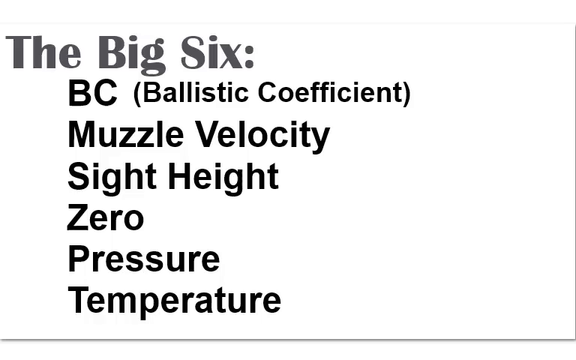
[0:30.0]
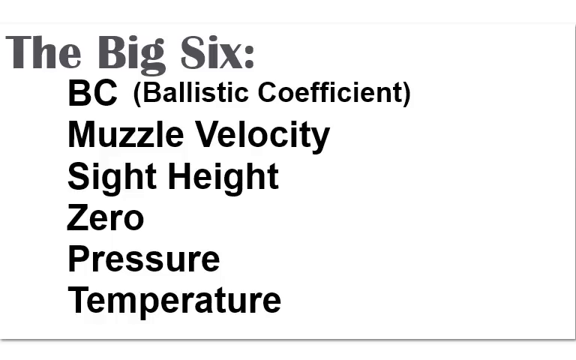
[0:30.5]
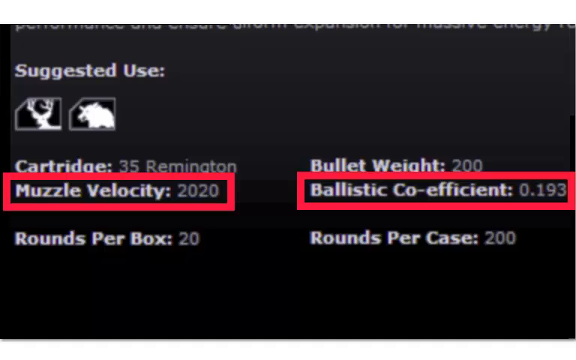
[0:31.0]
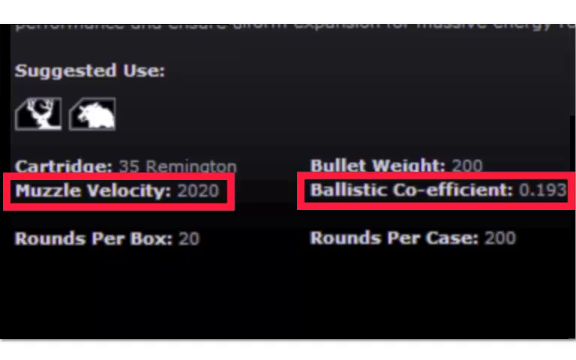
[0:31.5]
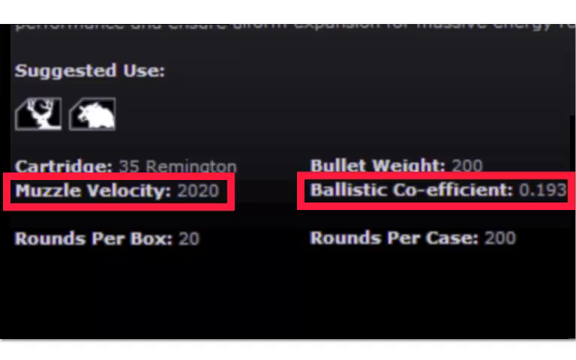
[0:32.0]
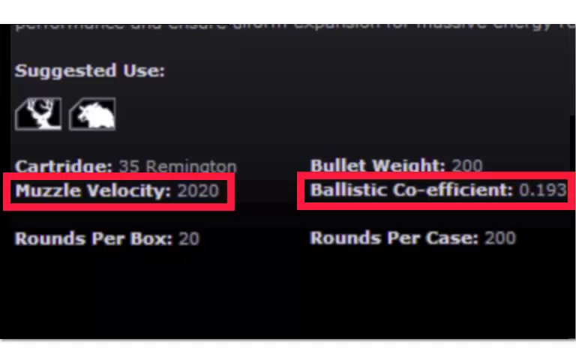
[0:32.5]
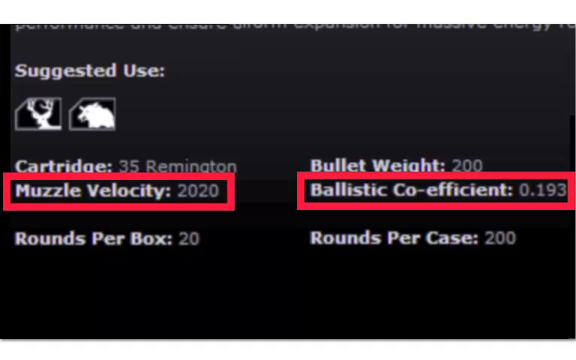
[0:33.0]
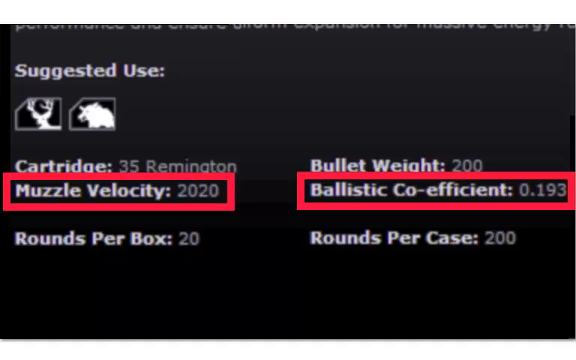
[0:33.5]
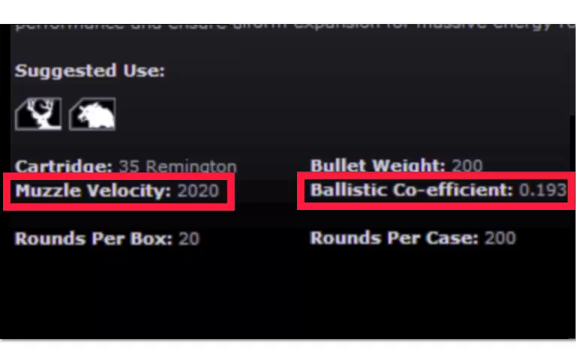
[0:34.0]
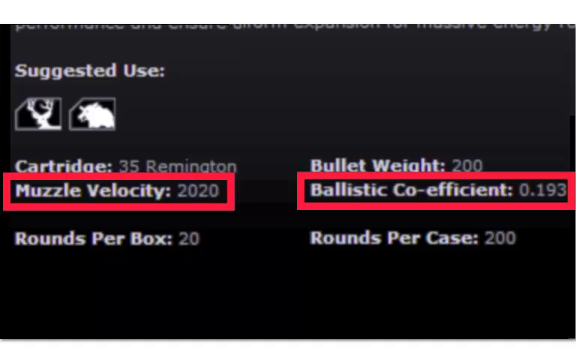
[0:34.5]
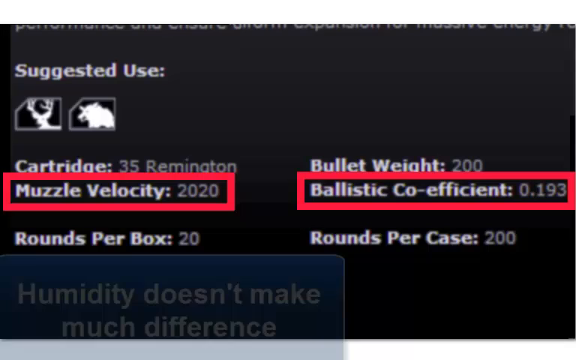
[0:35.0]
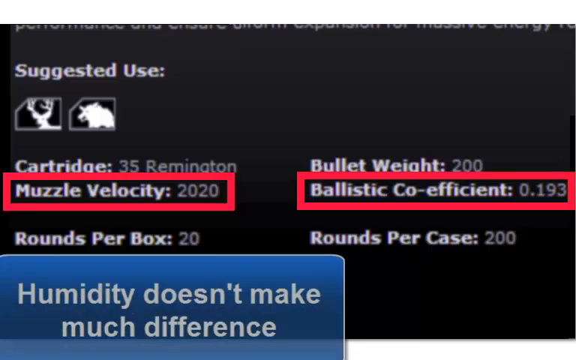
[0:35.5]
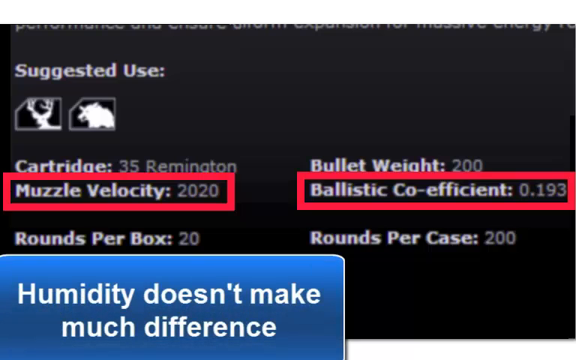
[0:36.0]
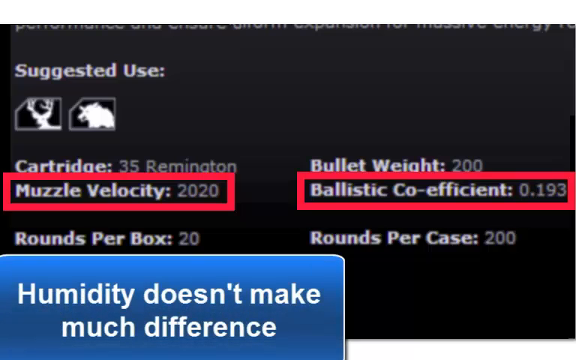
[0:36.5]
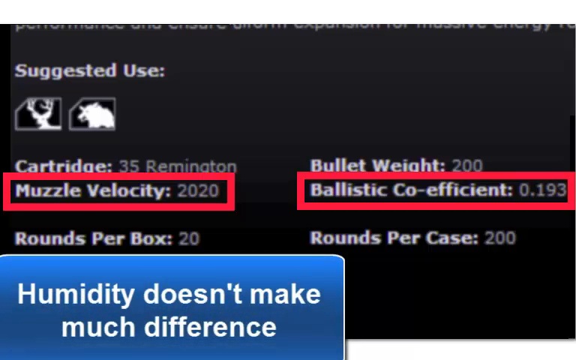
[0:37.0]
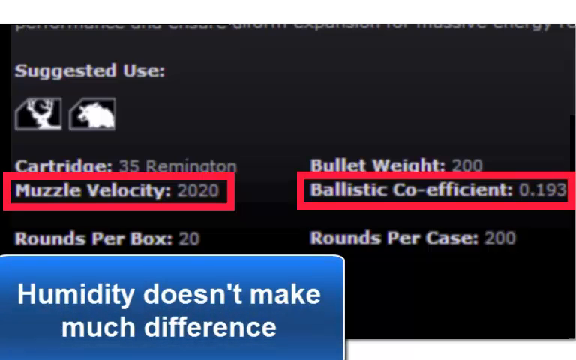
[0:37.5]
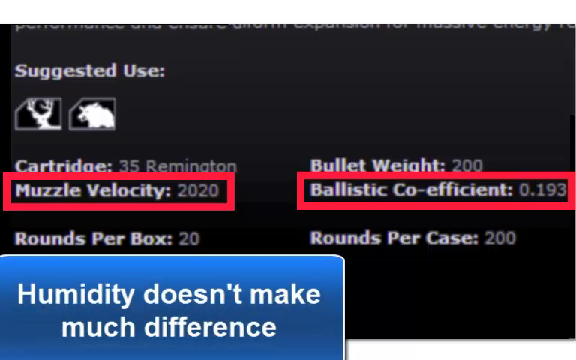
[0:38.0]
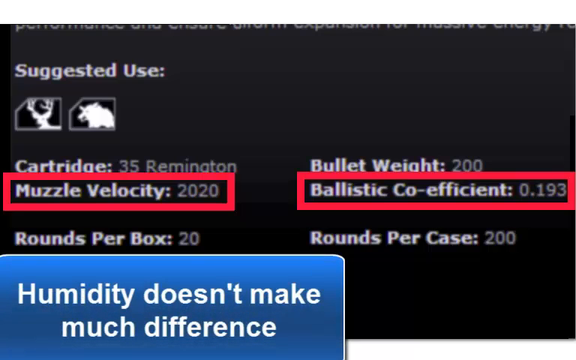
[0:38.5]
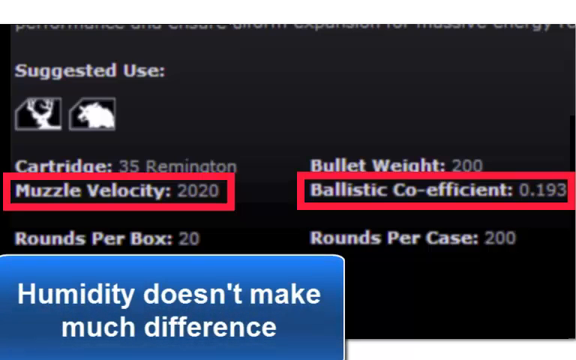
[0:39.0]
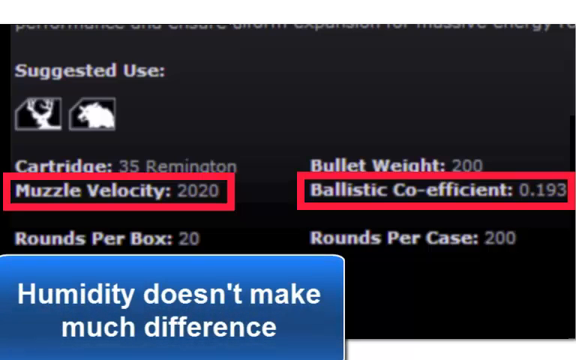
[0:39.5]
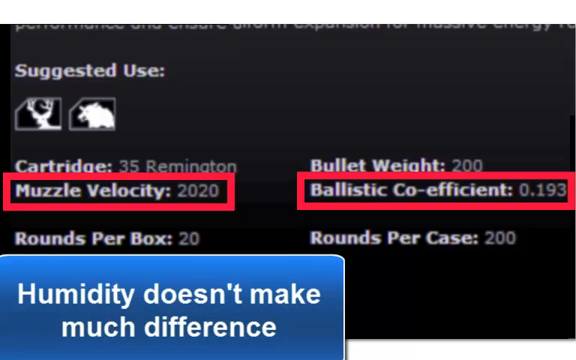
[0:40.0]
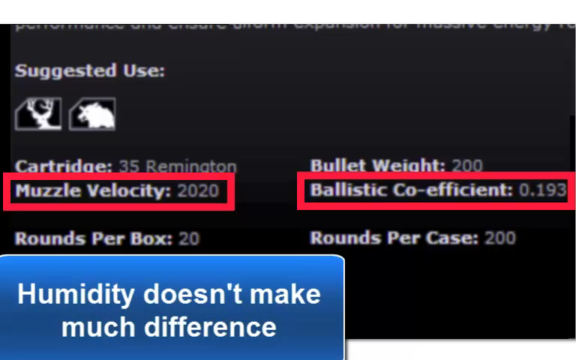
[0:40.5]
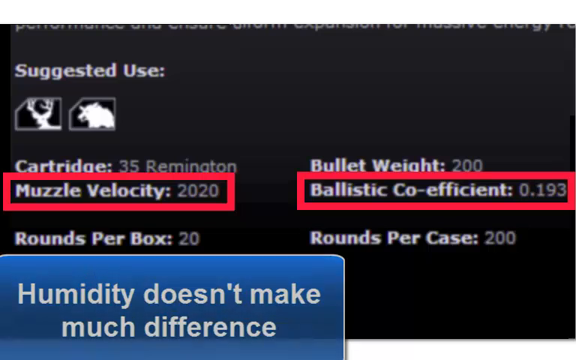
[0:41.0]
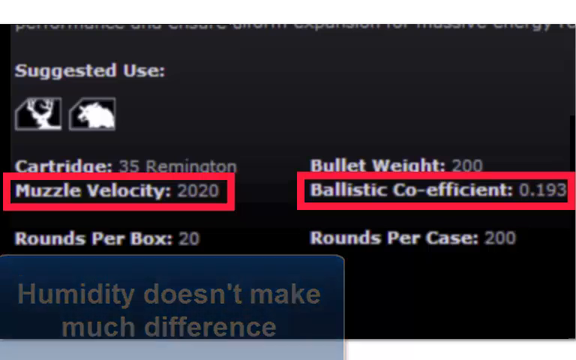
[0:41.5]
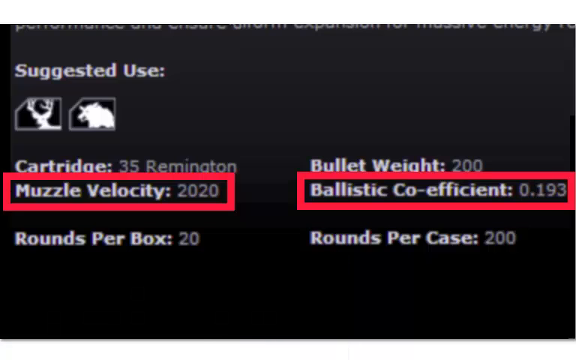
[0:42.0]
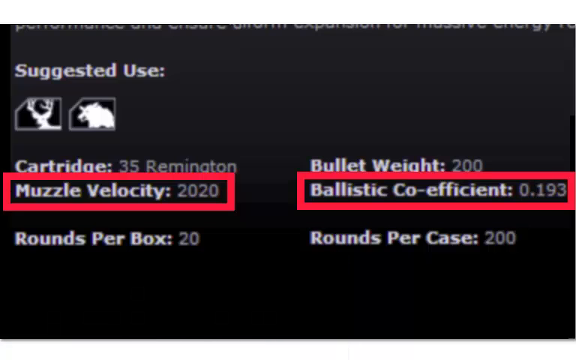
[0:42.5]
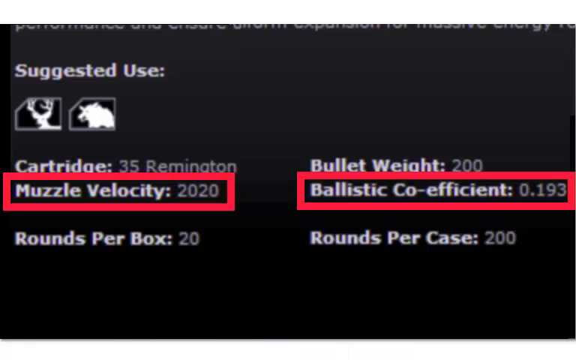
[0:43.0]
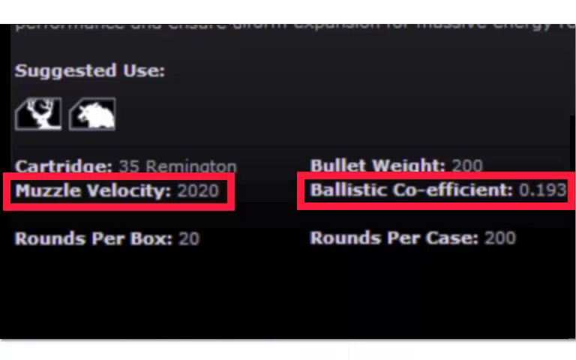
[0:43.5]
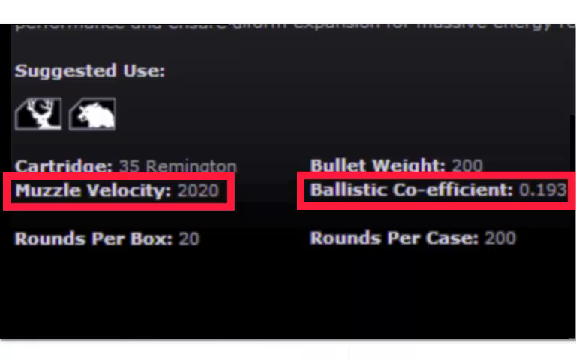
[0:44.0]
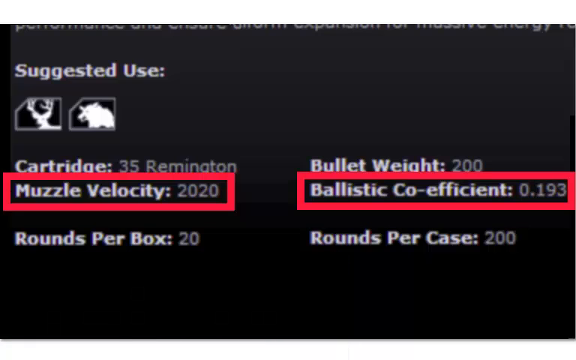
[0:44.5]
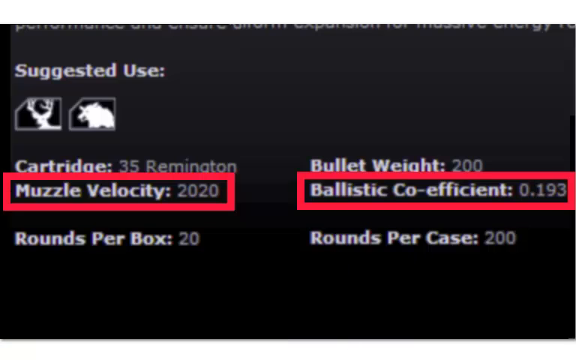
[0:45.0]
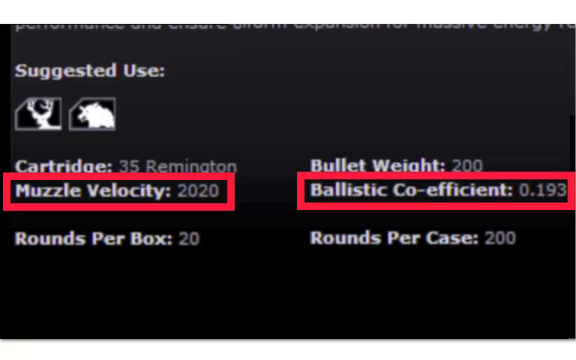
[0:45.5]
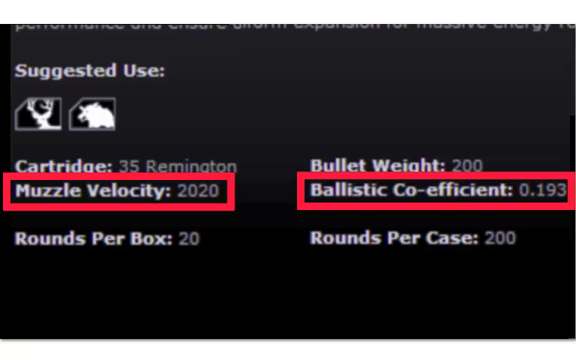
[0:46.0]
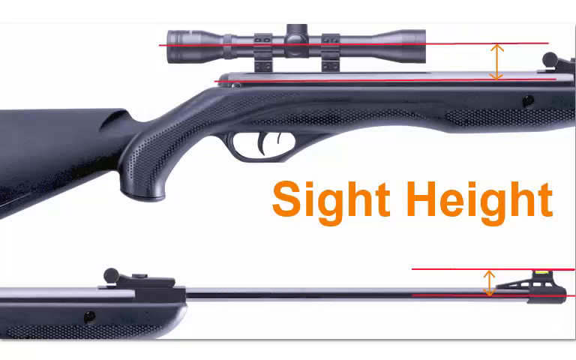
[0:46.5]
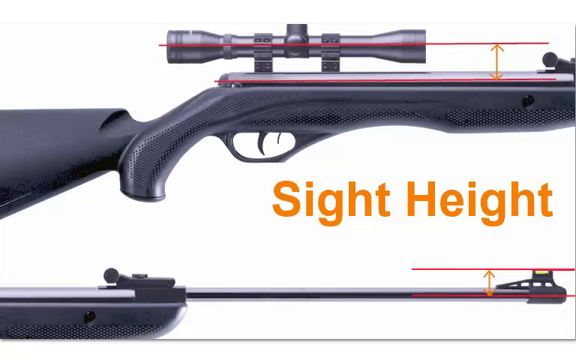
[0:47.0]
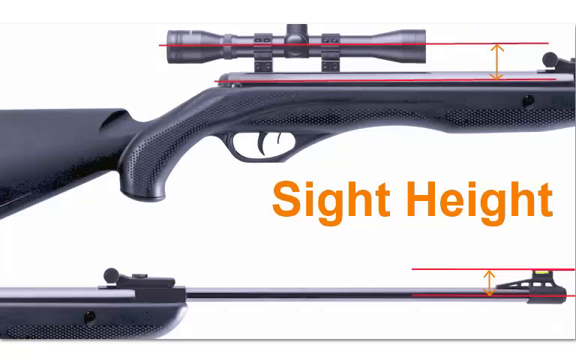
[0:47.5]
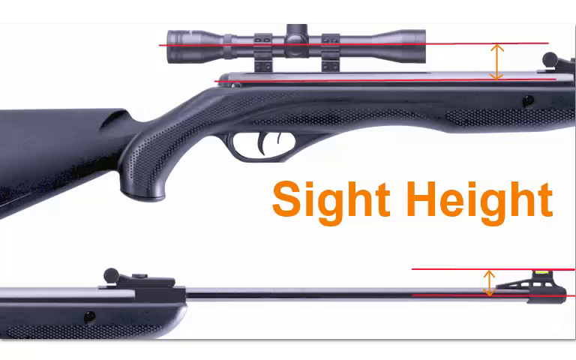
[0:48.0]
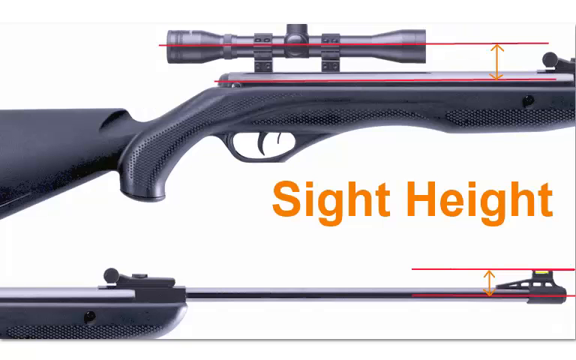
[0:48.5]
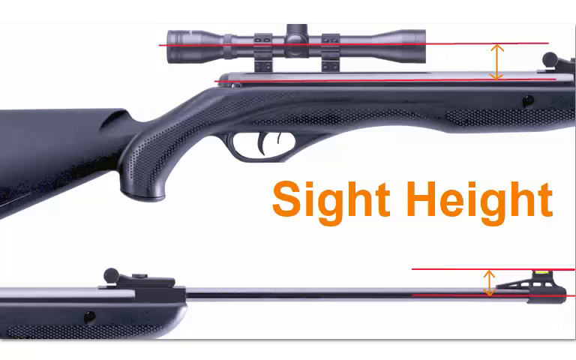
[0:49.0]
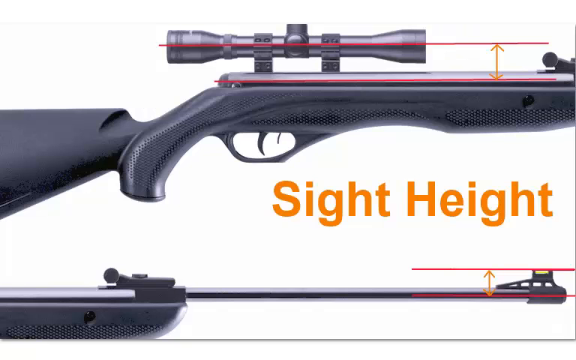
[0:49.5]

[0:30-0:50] The background is mostly white, with an ombre getting a little darker at the bottom. In the upper left corner, in a bigger gray font, it reads "the big six", with the word six spelled out, followed by two dots. Underneath, in a smaller black font, it reads "BC (ballistic coefficient)", then apparently "muzzle velocity", then "sight height", "zero", "pressure" and "temperature"; each item starts with a capital letter, except BC, which is fully capitalized. The screen then goes black and two areas are highlighted with red outlines. The one on the left reads "muzzle velocity 2020" in white font; the other box reads "ballistic co-efficient" and "0.193". Above the muzzle velocity on the left it reads "cartridge" and "35 remaining", with "rounds per box 20" underneath. On the right it reads "rounds per case 200", with "bullet weight 200" above it. In the lower left corner, white text on a blue rectangular background outlined in white reads "humidity doesn't make much difference". Then a zoomed-in view of a gun appears with "sight height" in orange.